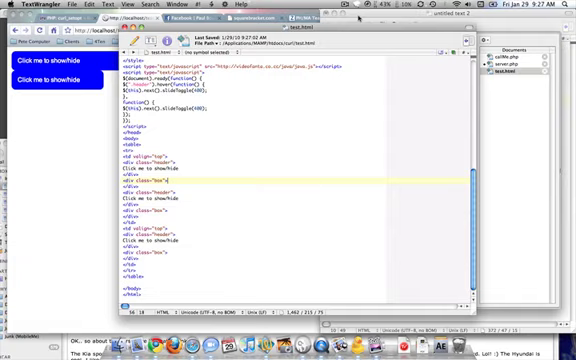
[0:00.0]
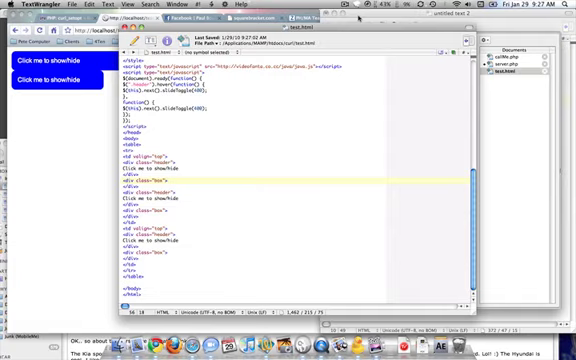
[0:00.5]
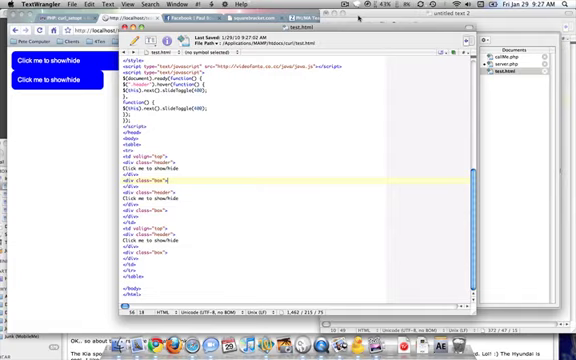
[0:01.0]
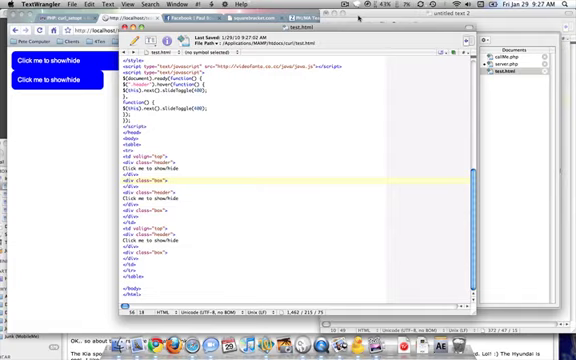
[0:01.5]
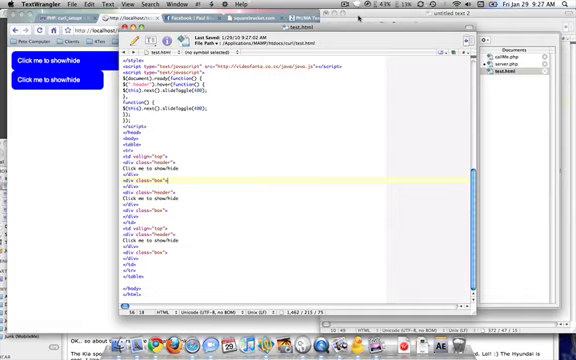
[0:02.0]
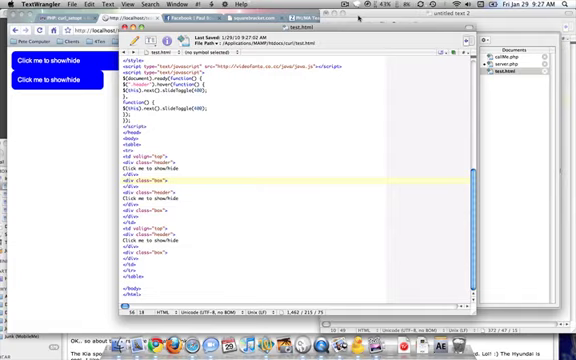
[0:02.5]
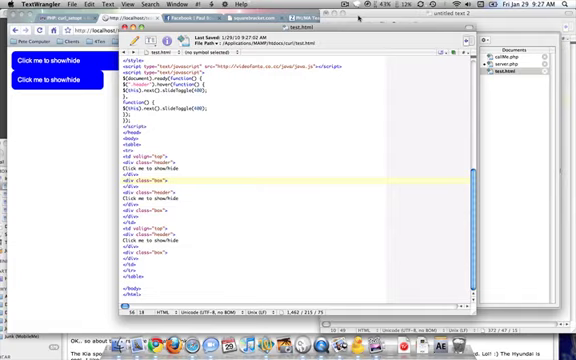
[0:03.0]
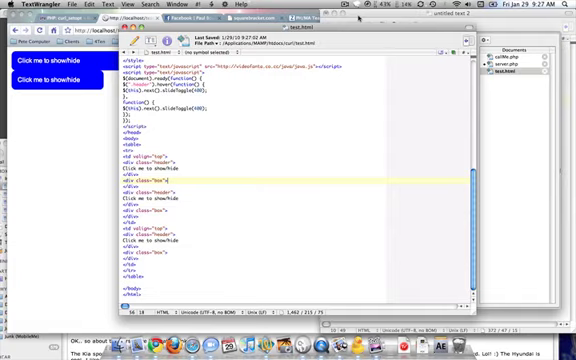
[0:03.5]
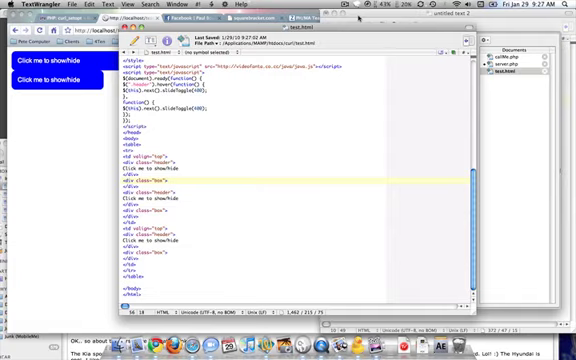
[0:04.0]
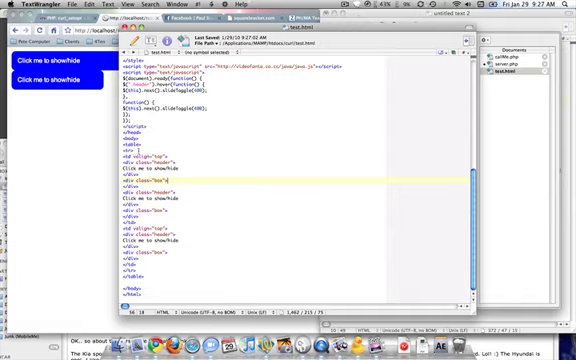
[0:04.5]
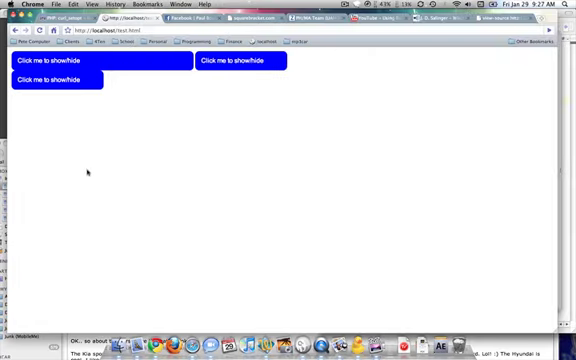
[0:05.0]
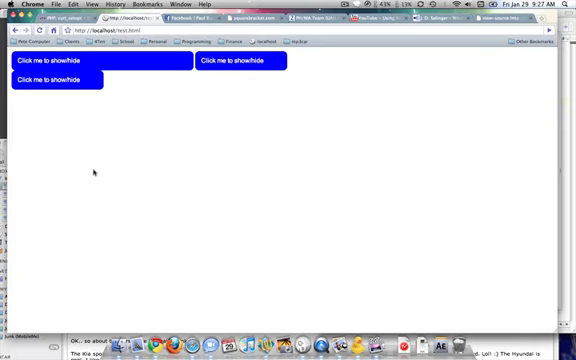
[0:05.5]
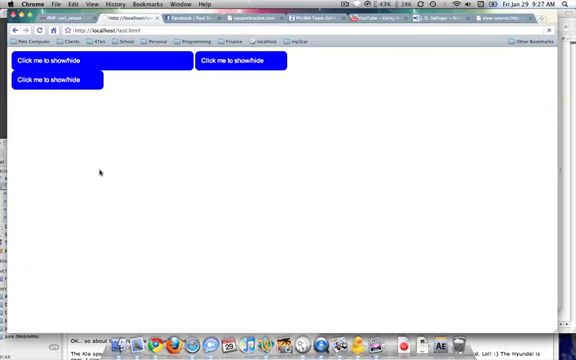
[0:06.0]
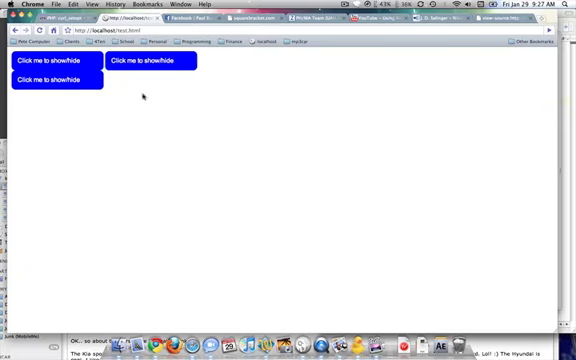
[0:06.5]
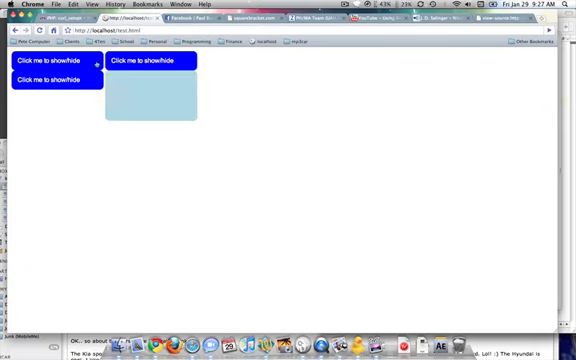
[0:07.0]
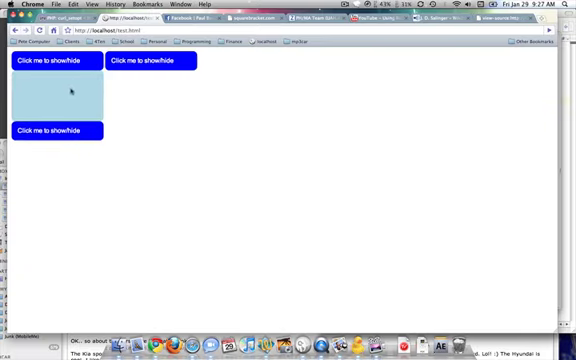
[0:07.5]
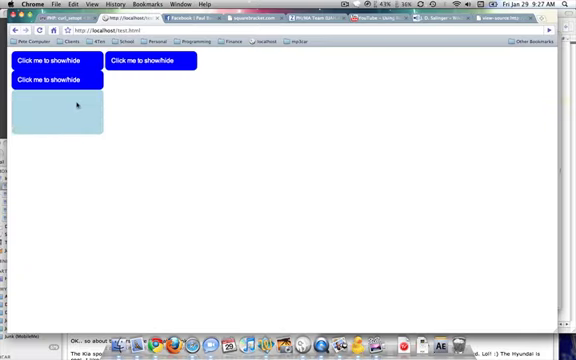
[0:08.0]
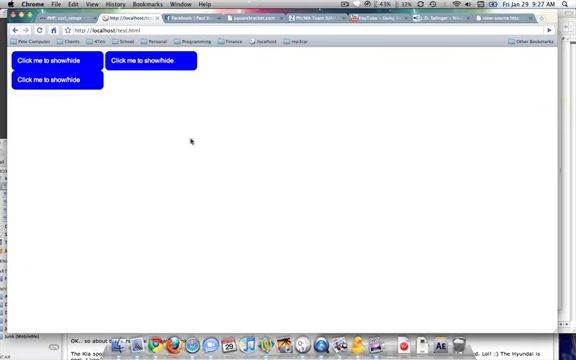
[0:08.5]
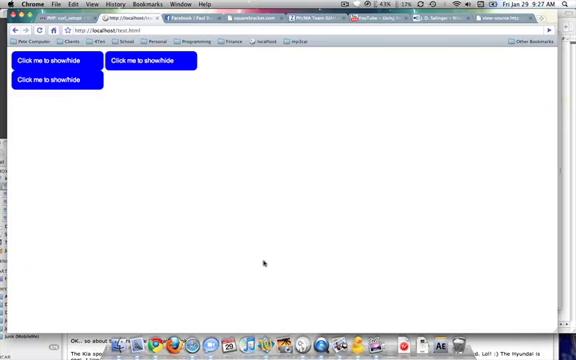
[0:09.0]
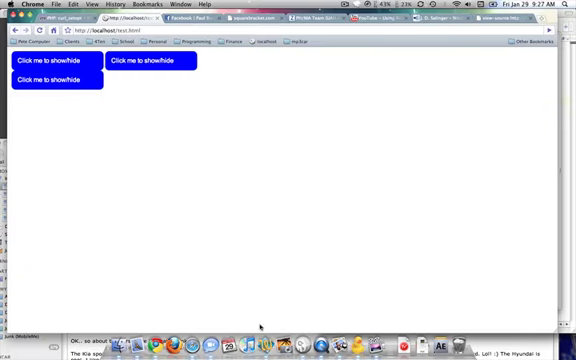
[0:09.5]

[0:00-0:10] Someone is recording their screen on Mac OS. A window is open showing various lines of code, which they are editing, though the text is low-resolution and very blurry. They close this box of code and show a browser of some kind that has the local host open in a test environment, according to the URL box. There are three blue buttons, each reading "click me to show / hide." They click on all three, and blue boxes come out from the bottom of each when clicked, then disappear as soon as the mouse cursor moves away from them. They then open an app launcher at the bottom.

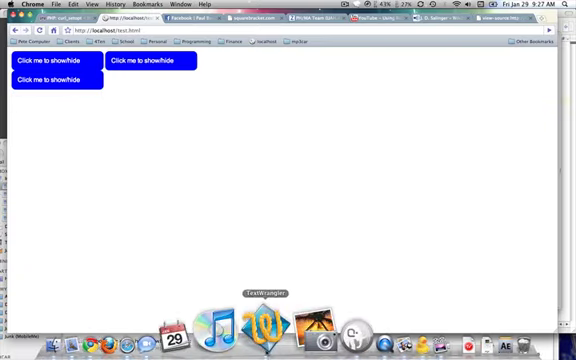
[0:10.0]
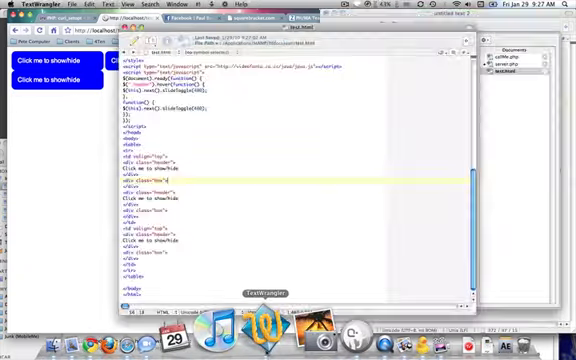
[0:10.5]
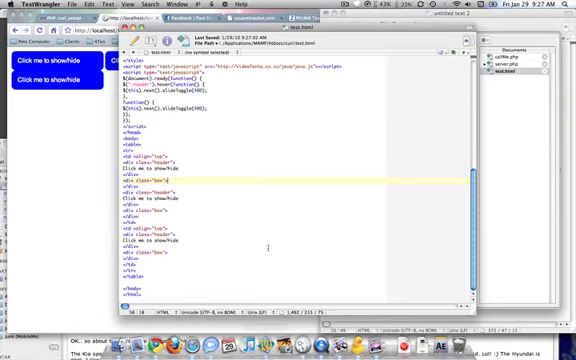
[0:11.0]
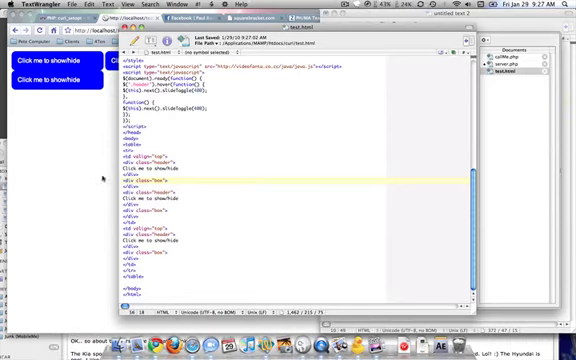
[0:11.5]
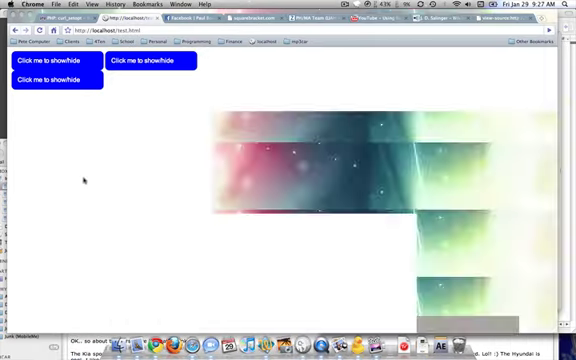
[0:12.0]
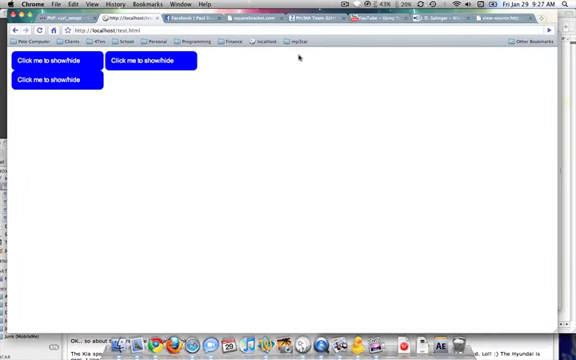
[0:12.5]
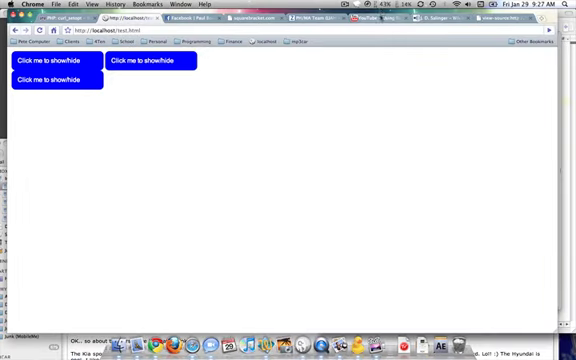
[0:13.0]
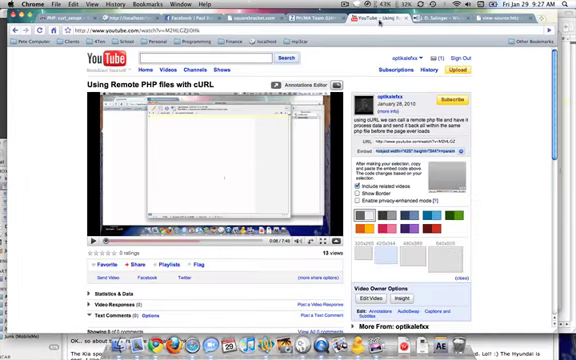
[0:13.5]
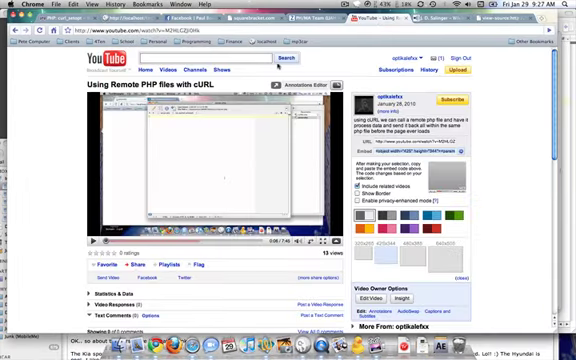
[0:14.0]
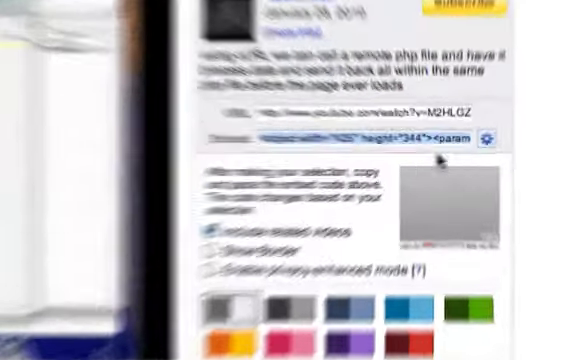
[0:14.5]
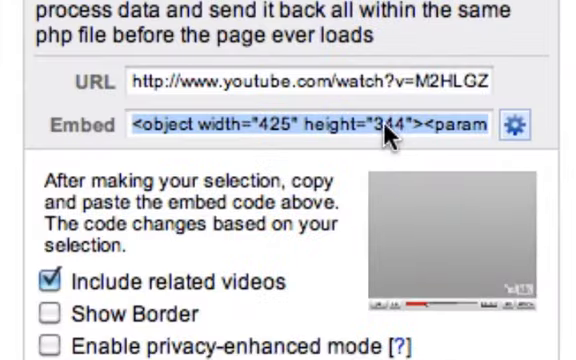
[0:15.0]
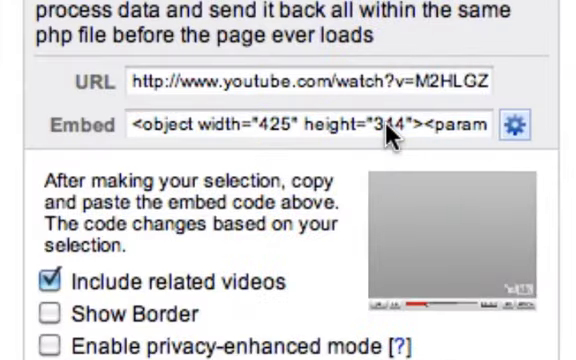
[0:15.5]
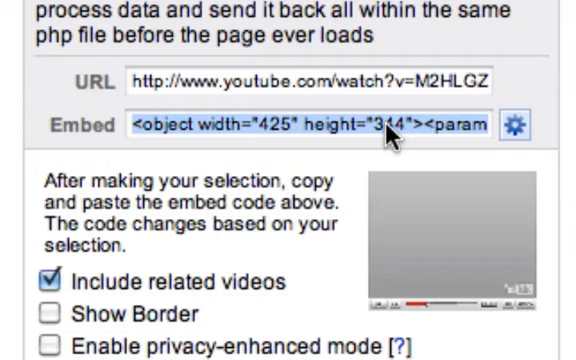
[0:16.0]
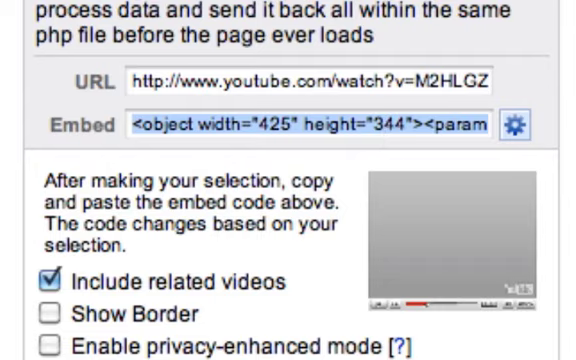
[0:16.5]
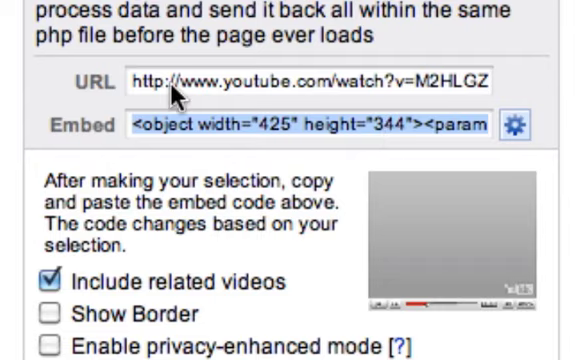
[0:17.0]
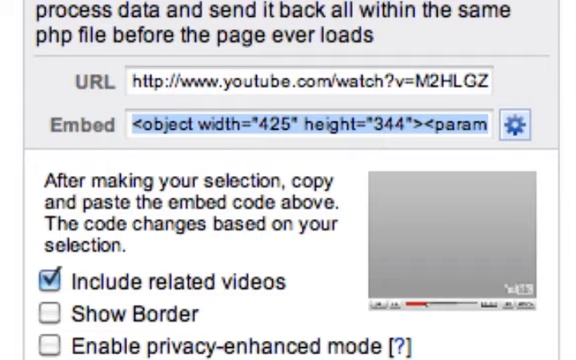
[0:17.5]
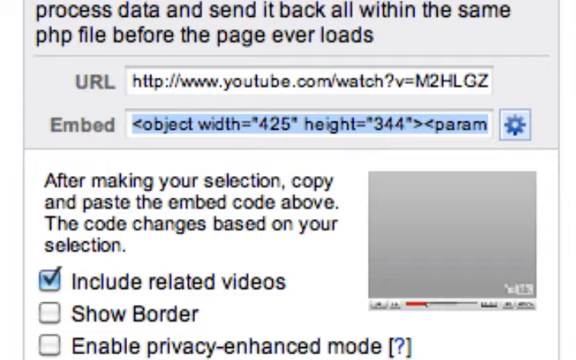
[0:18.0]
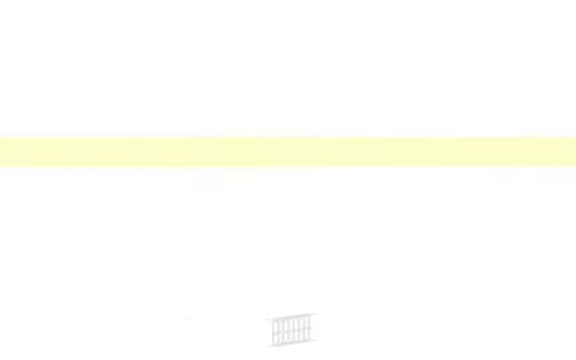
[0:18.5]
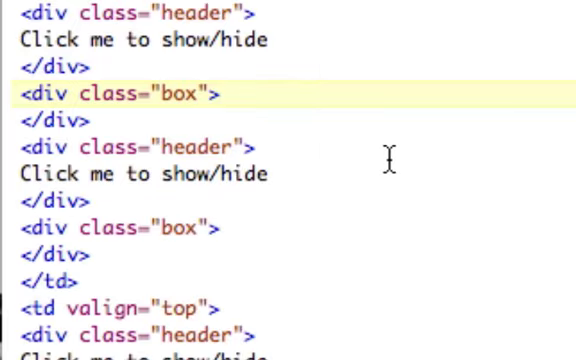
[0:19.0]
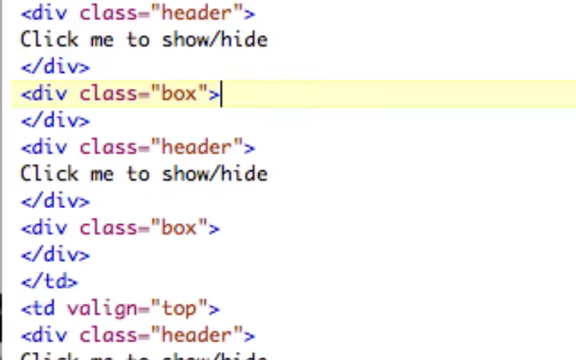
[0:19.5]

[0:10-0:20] Someone is recording their computer screen on Mac OS with Chrome open. The tab is set to "localhost/test.html." At the very bottom of the screen they open an app called Text Wrangler, which opens a box full of a large amount of code; they click a line and then close the box. They move the mouse cursor up to another tab open to a YouTube webpage, where the video is titled "Using Remote PHP Files with CURL." The view zooms in on the right side of the video, where there are two text boxes to copy from: the top one reads "URL" and shows the URL of the YouTube video, and the bottom one is an embed link for embedding the YouTube video on a webpage. The view then zooms in on the box of code, where they are selecting a line.